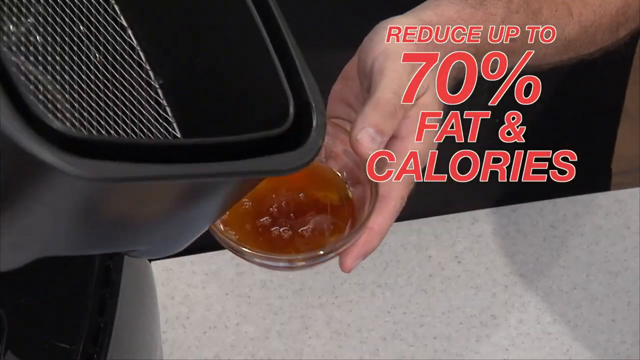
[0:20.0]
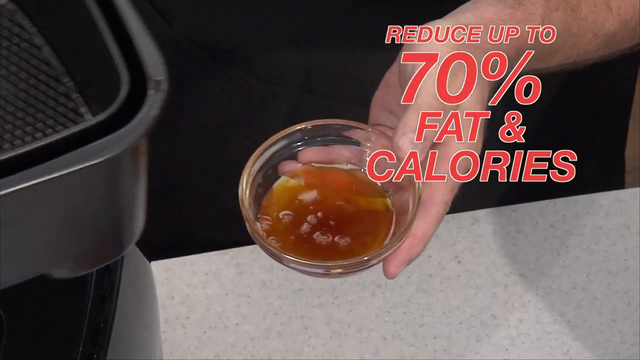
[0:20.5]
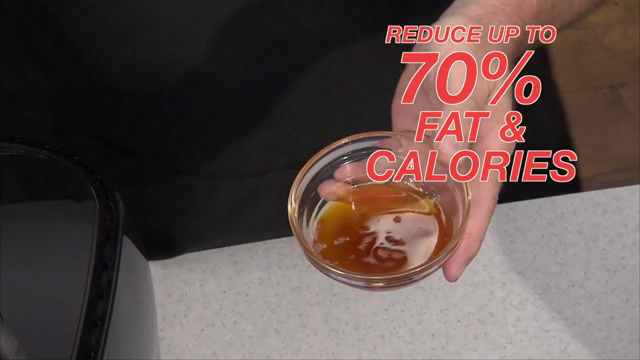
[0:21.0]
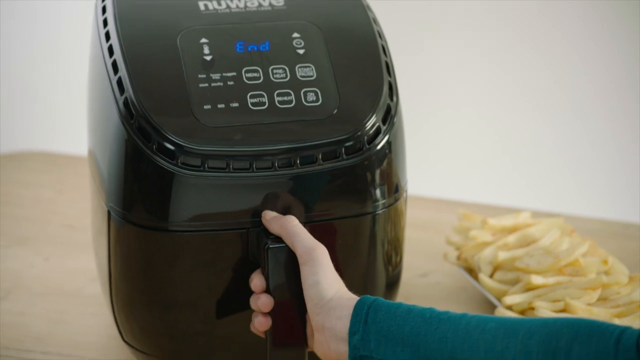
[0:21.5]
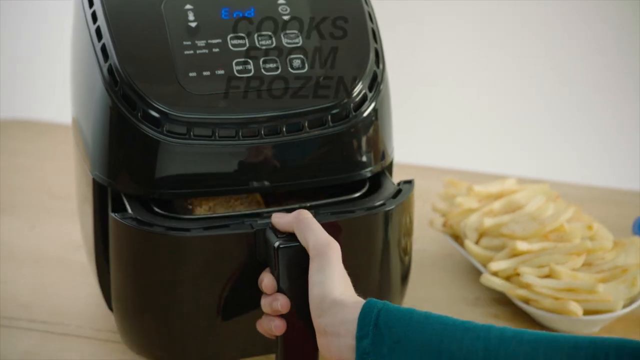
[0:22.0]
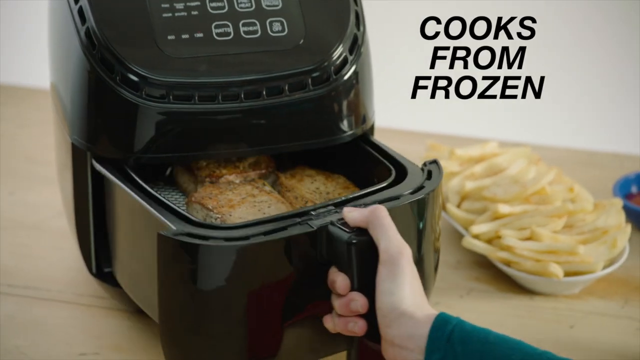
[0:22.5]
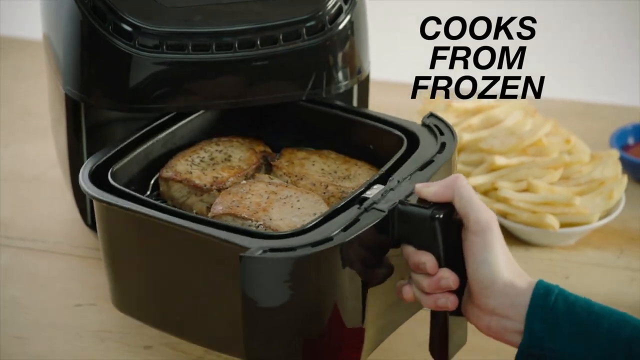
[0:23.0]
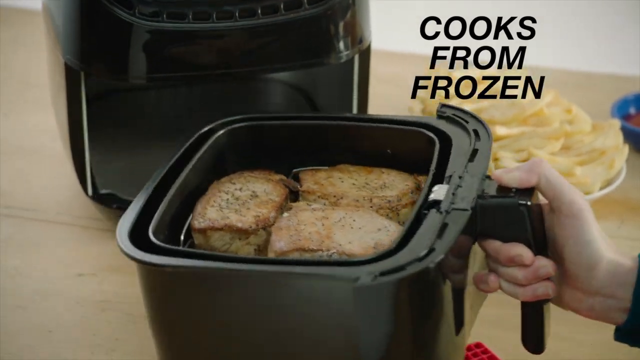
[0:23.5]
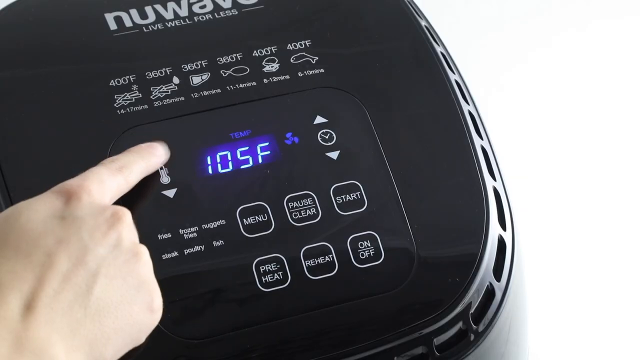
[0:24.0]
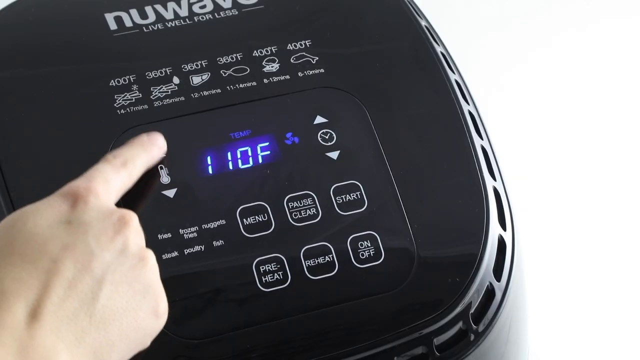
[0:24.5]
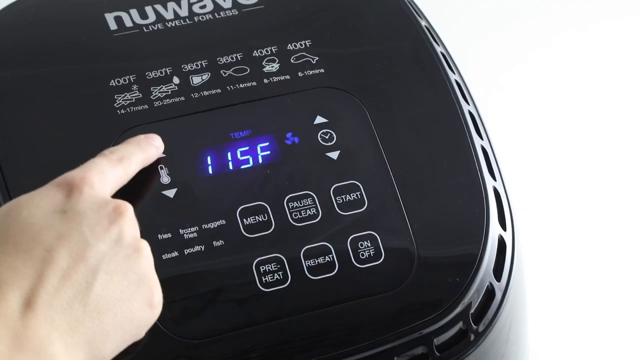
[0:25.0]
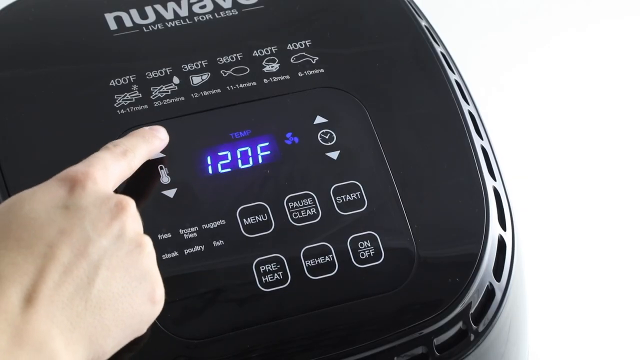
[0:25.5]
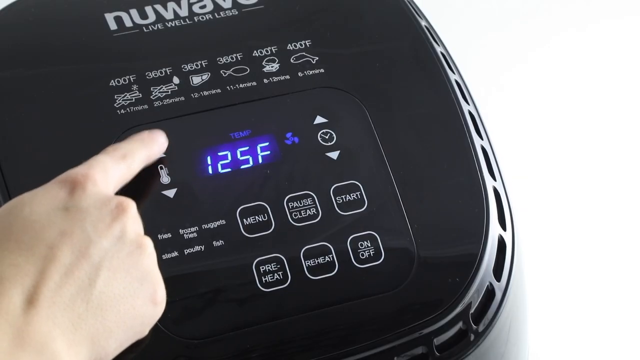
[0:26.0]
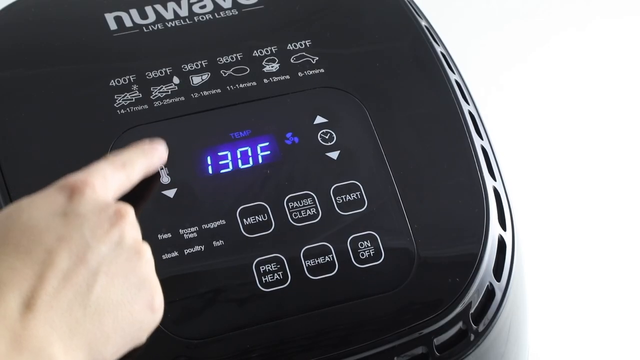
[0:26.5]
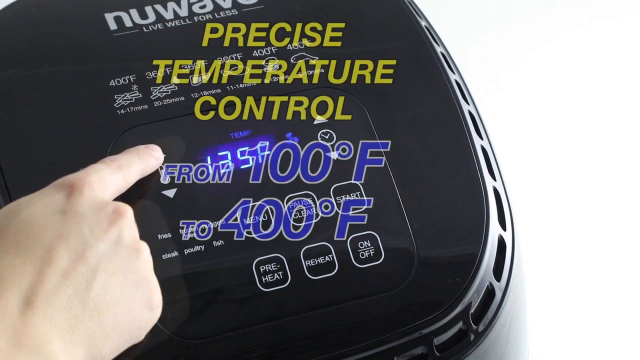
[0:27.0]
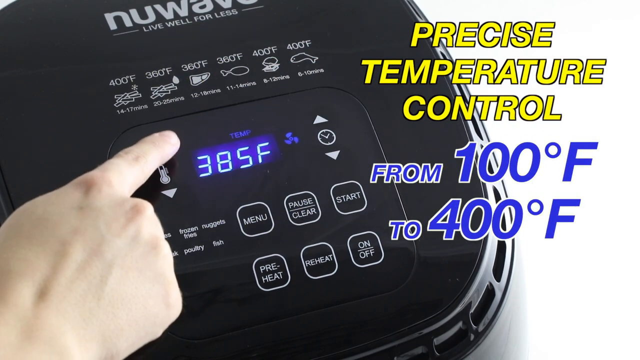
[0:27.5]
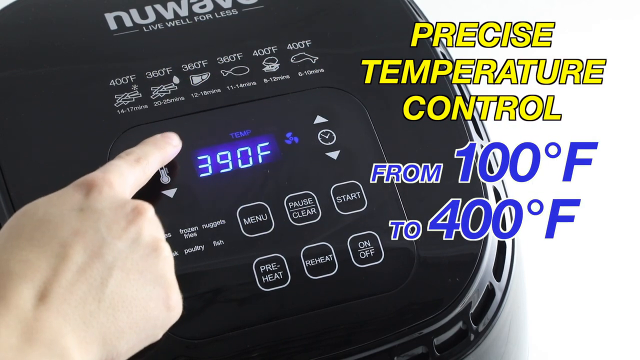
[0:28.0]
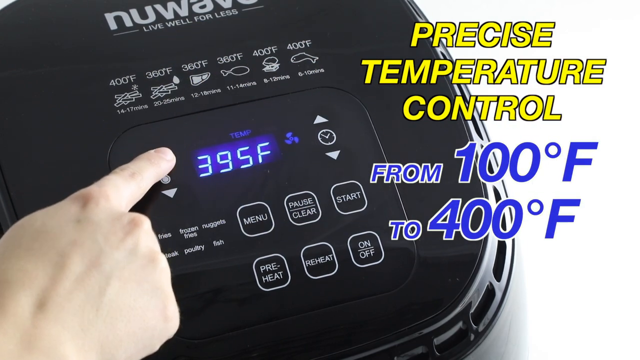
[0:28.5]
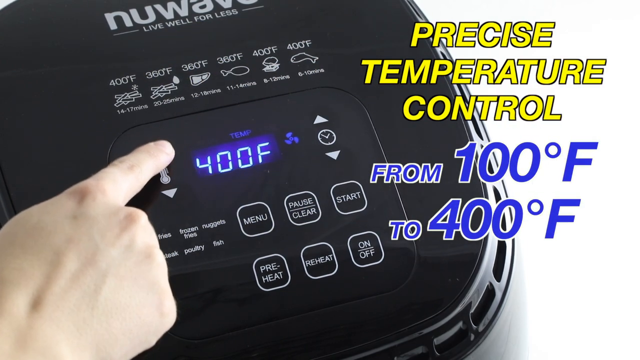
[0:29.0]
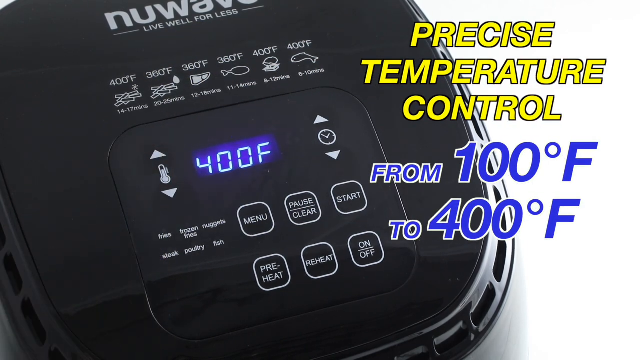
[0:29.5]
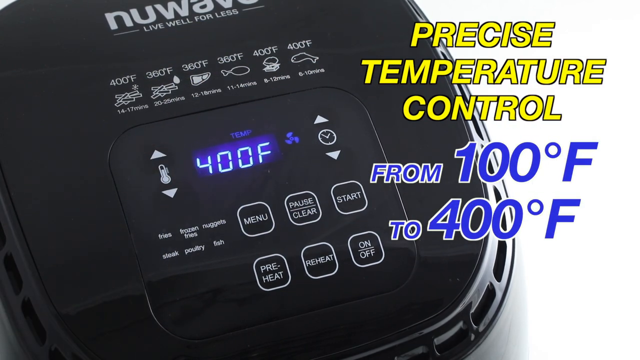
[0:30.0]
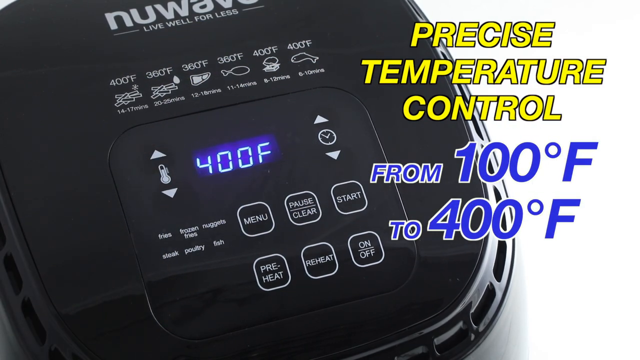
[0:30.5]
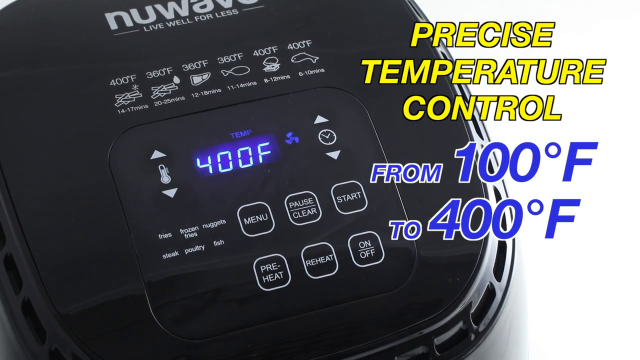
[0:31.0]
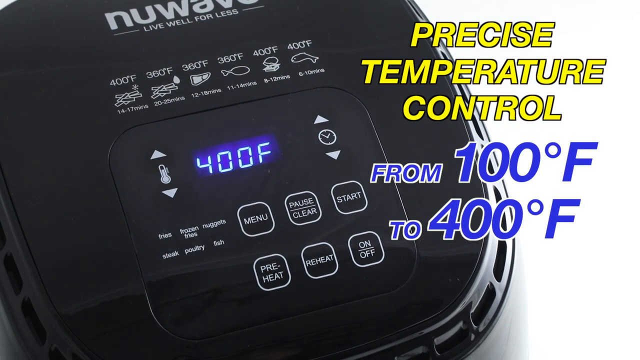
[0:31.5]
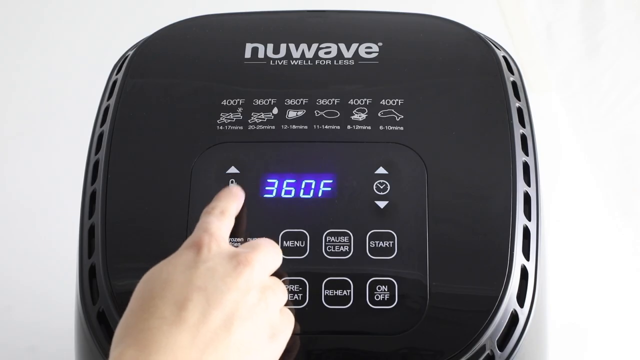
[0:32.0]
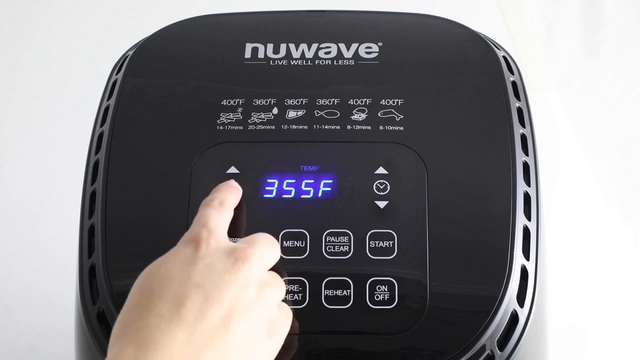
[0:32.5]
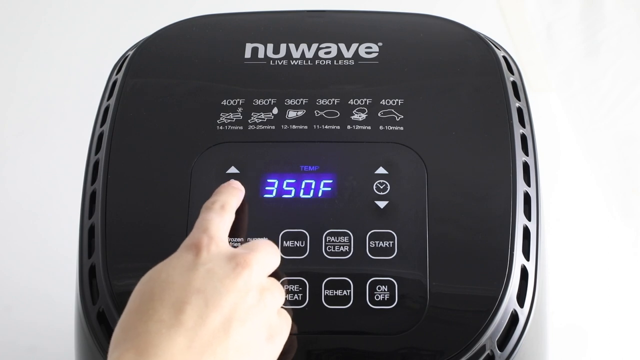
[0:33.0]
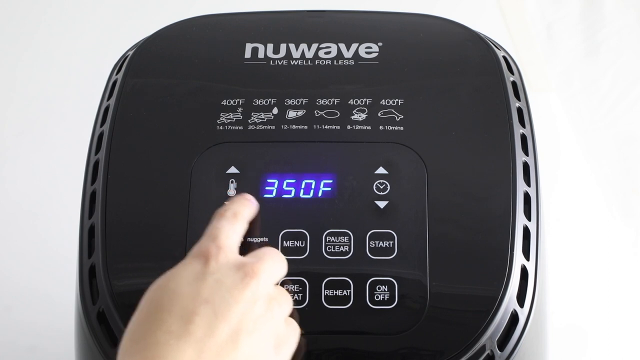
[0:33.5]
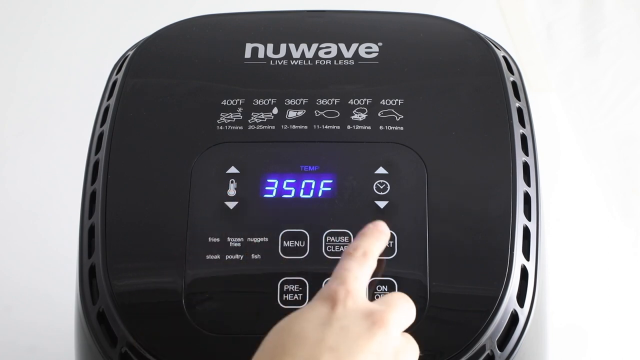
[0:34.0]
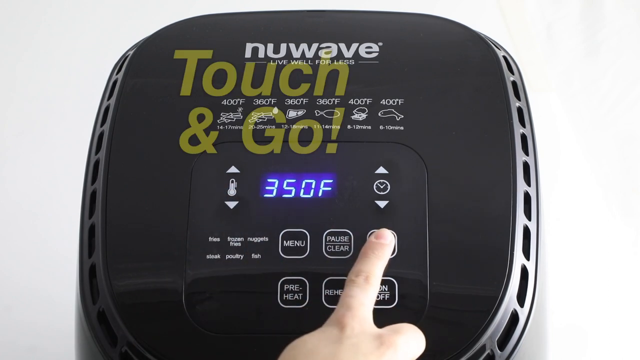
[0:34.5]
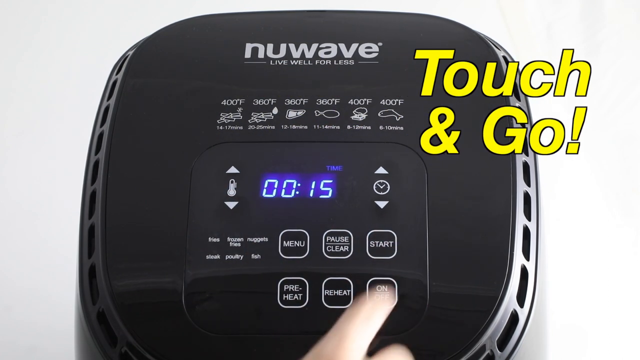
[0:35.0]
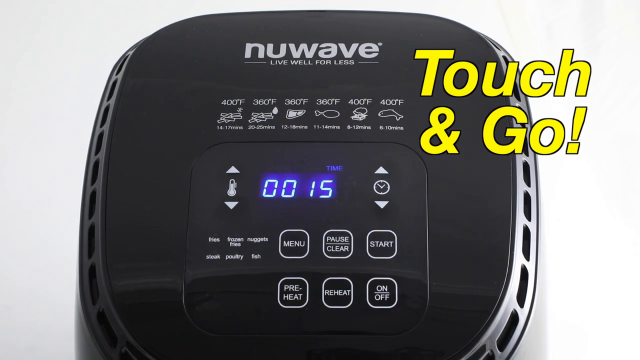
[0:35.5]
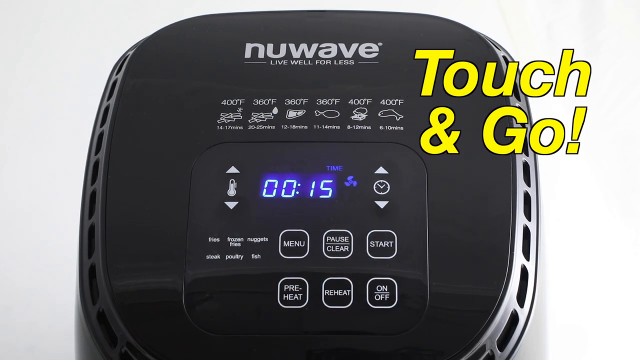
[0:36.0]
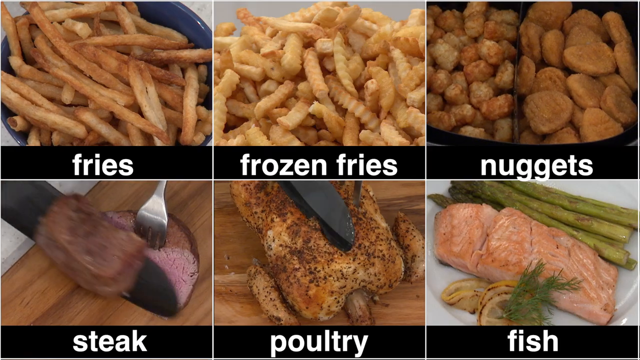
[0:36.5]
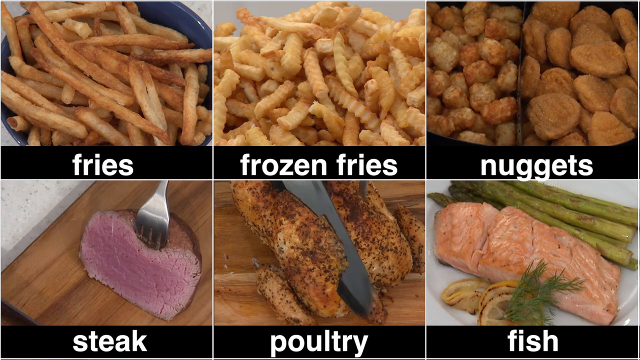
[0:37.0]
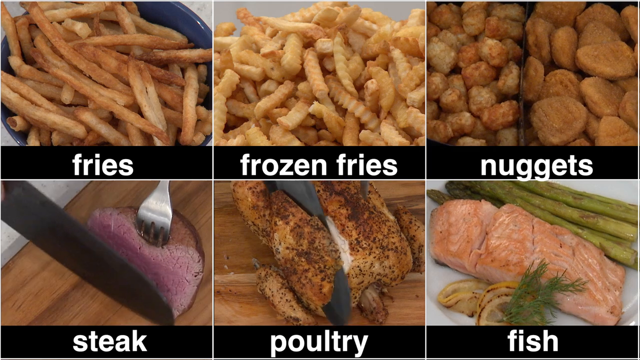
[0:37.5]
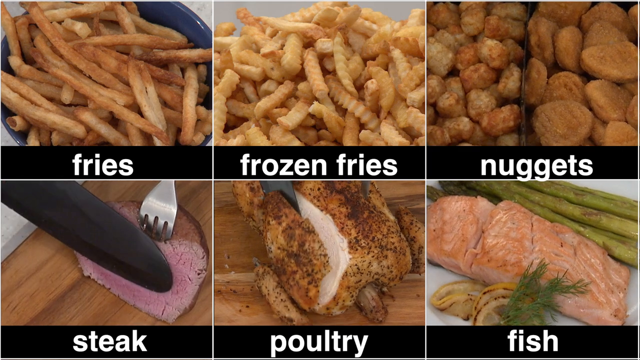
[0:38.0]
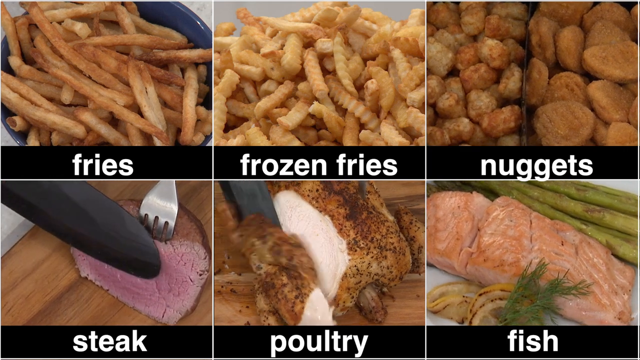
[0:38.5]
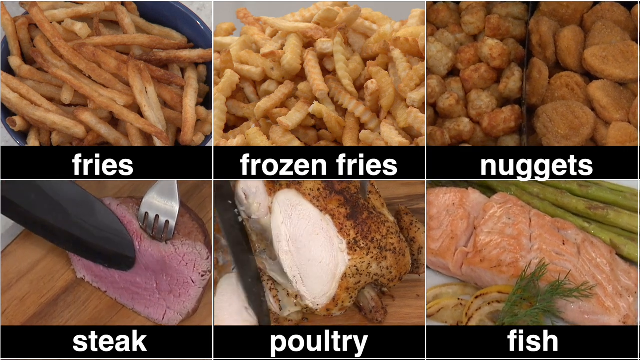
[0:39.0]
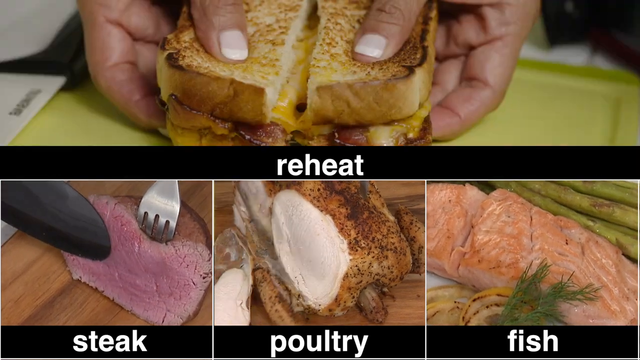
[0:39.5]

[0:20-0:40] A claim that it can reduce up to 70% of the fat and calories is presented. A black basket is shown, solid black with a wire mesh inside. A person's left hand holds a small clear bowl containing a brown substance while a right hand pulls the basket out. A right hand then goes to the top of the air fryer, a digital panel where the temperature settings can be added and changed; the top has the menu and the pause button. Precise temperature control from 100 degrees Fahrenheit to 400 degrees Fahrenheit is indicated. The right hand pushes buttons to change the touch-and-go settings, which include fries, frozen fries and nuggets. At the bottom is the meat that was being cut earlier, with the silver utensil coming down from the top. The hand moves the arrows up and down to change the temperature from 350. Six blocks with pictures of food appear. The bottom middle box looks like chicken that is crunchy on the outside, and the bottom right has a fish filet with green items laid diagonally, on a black box on a white area.